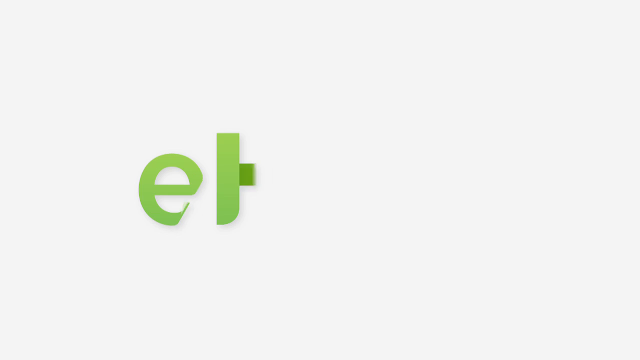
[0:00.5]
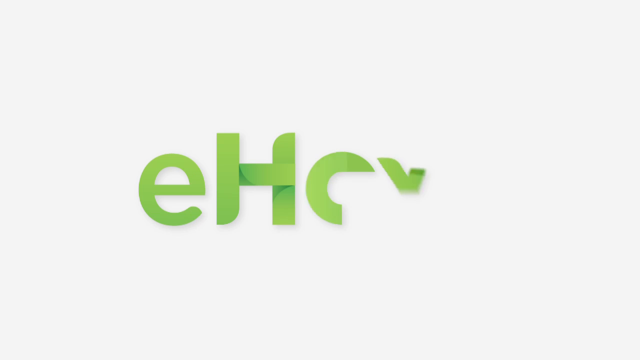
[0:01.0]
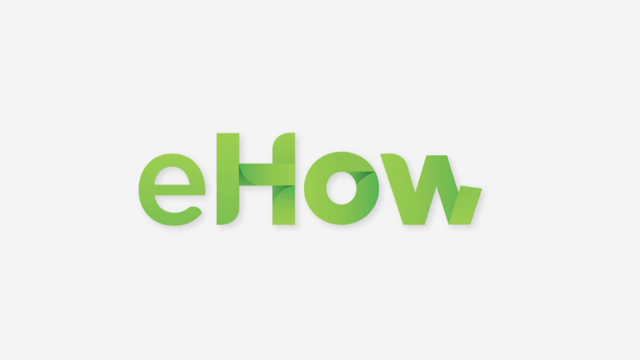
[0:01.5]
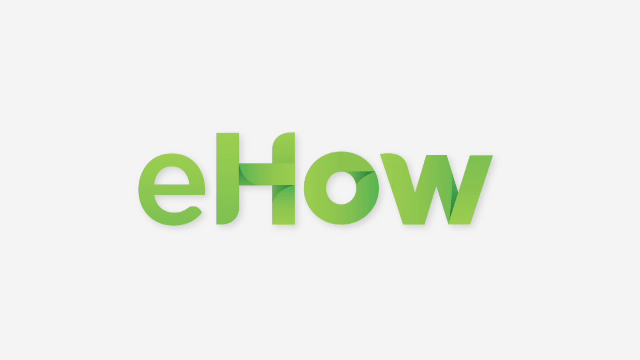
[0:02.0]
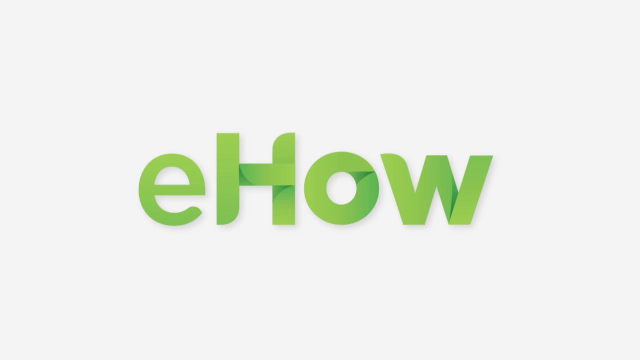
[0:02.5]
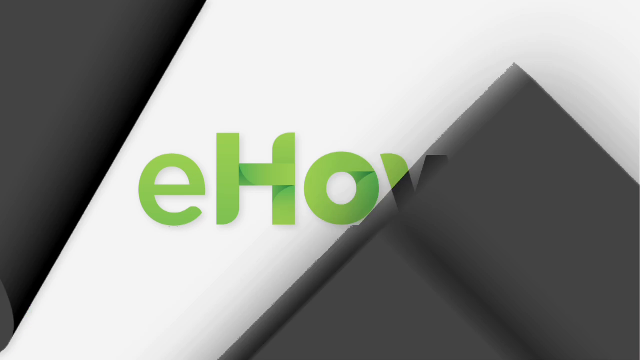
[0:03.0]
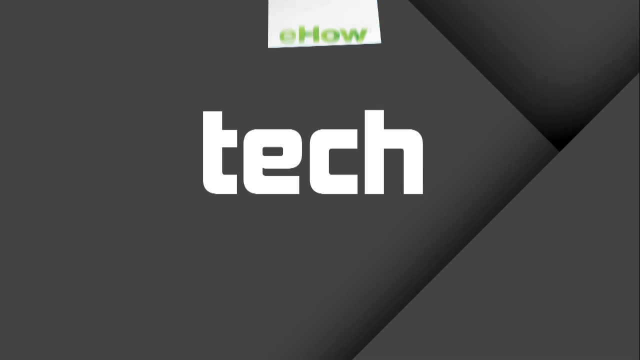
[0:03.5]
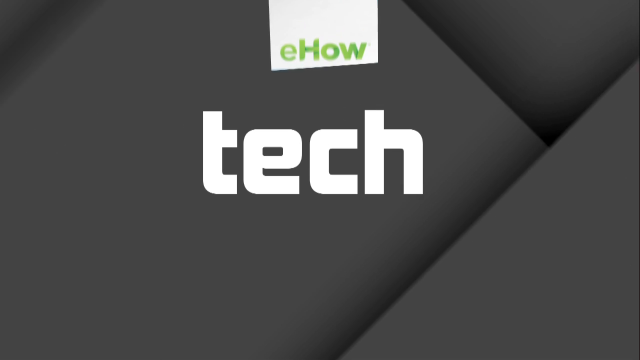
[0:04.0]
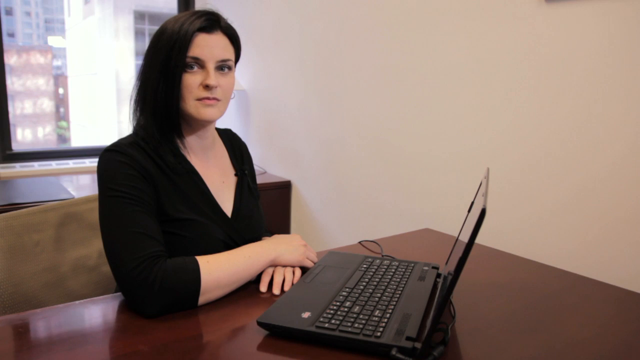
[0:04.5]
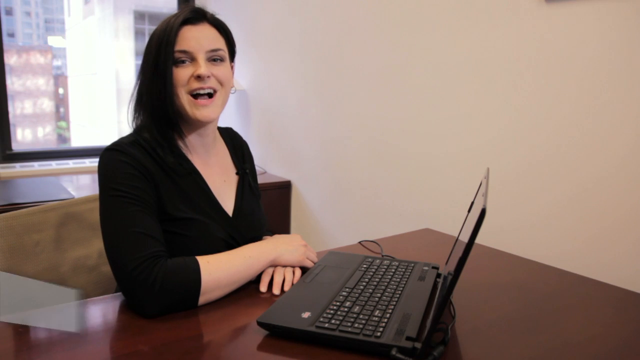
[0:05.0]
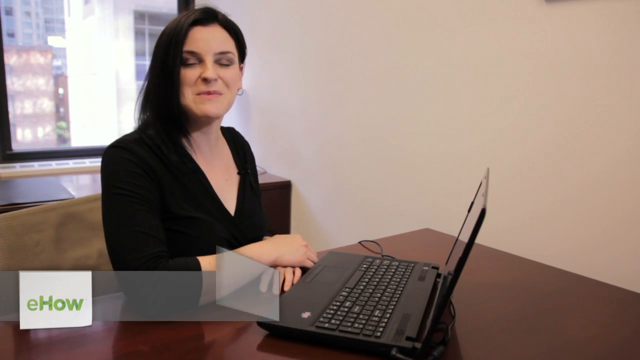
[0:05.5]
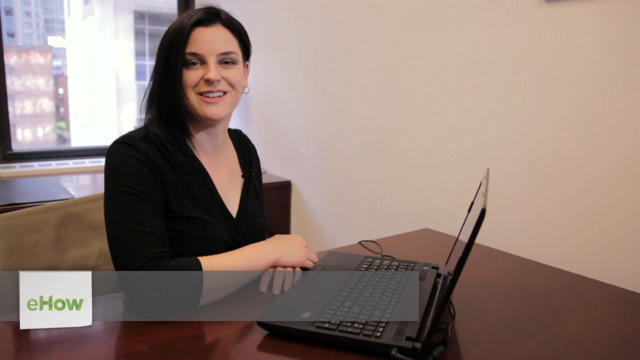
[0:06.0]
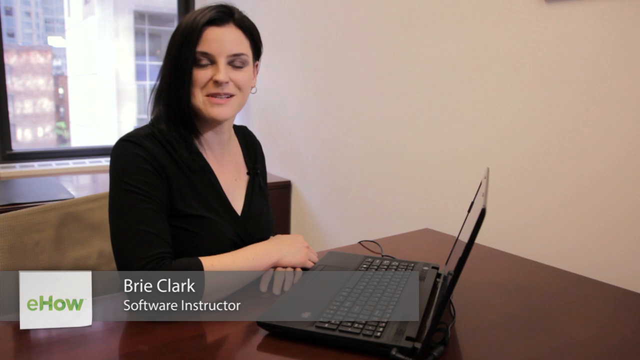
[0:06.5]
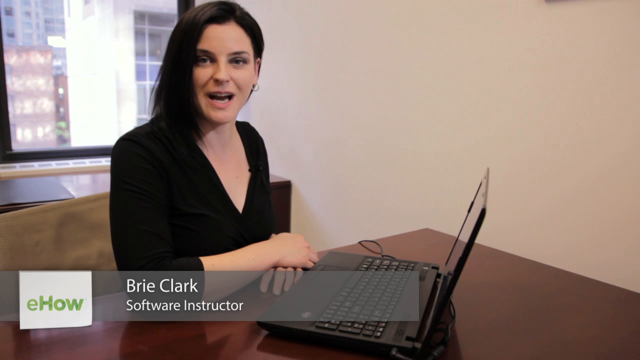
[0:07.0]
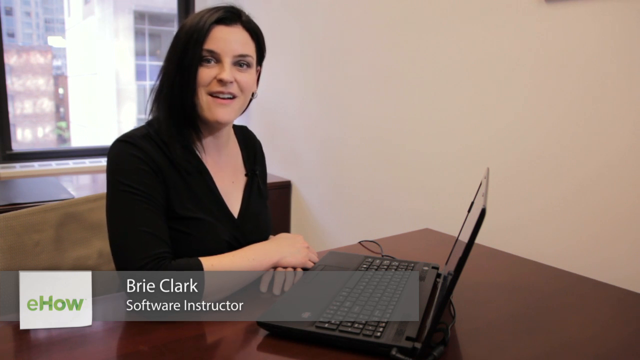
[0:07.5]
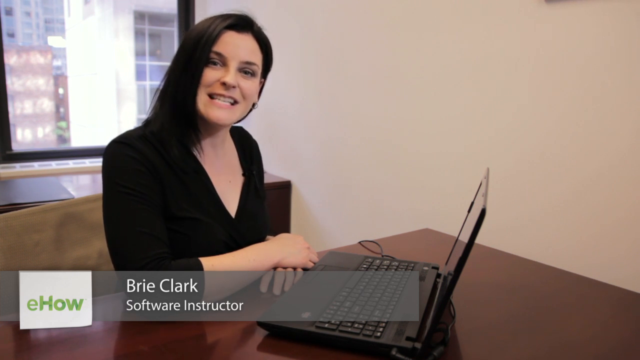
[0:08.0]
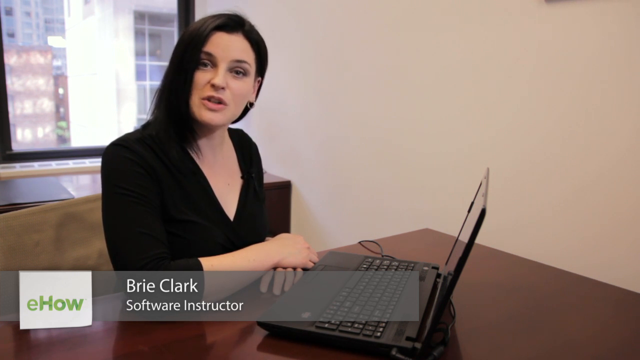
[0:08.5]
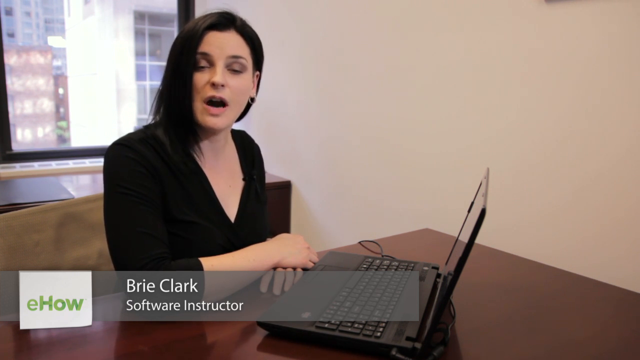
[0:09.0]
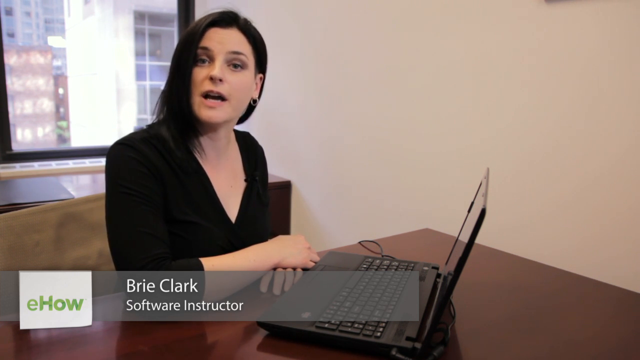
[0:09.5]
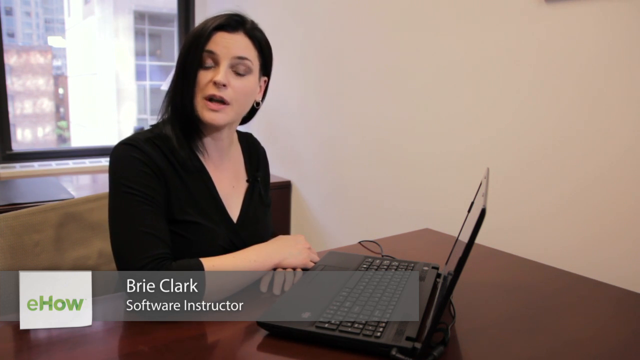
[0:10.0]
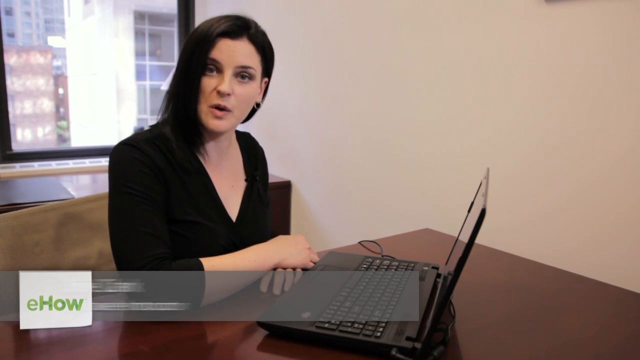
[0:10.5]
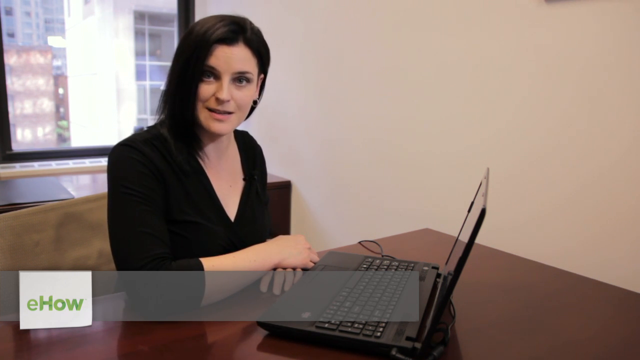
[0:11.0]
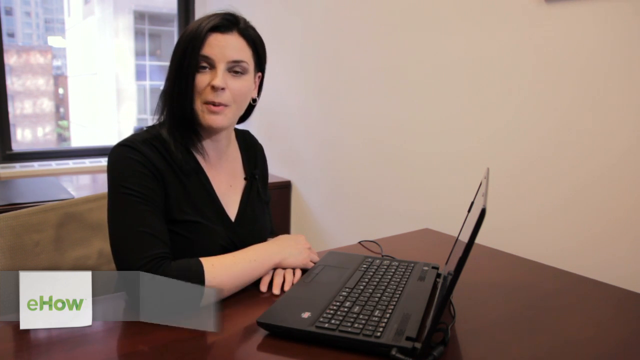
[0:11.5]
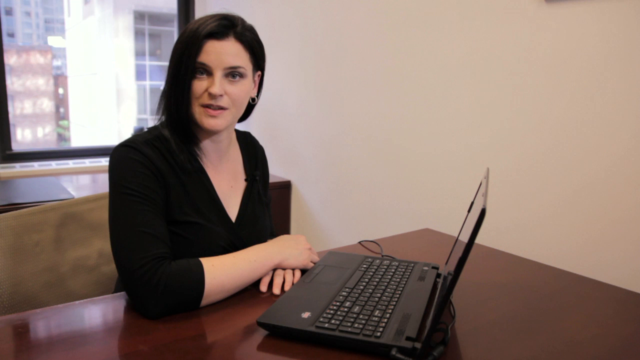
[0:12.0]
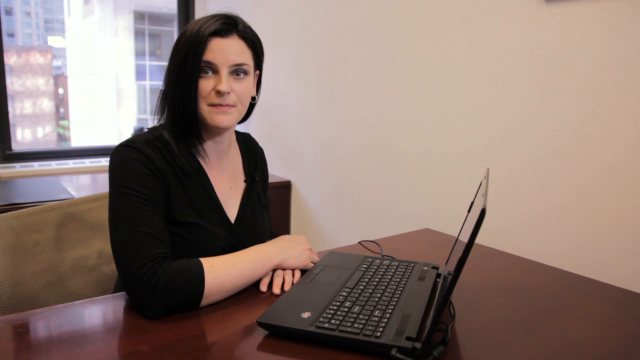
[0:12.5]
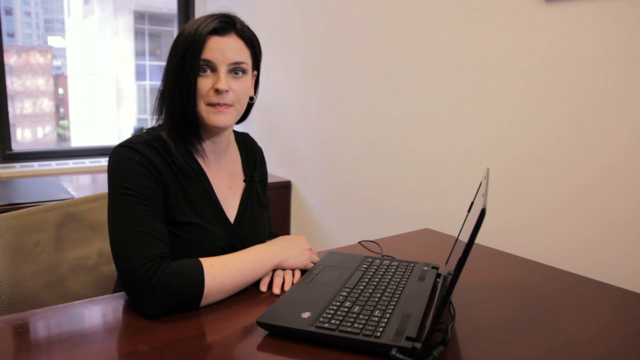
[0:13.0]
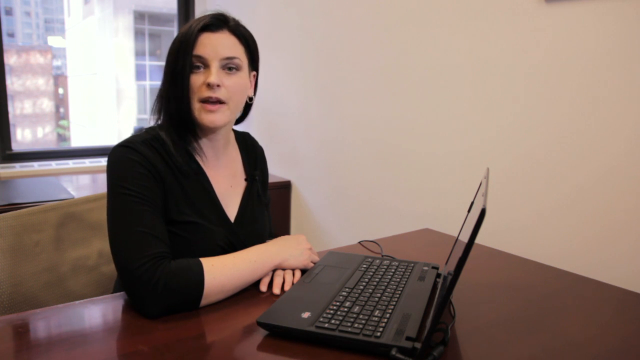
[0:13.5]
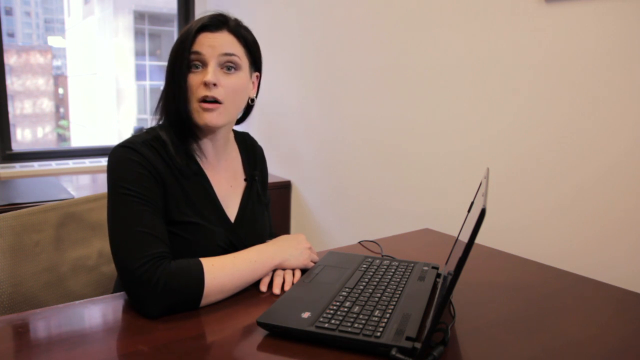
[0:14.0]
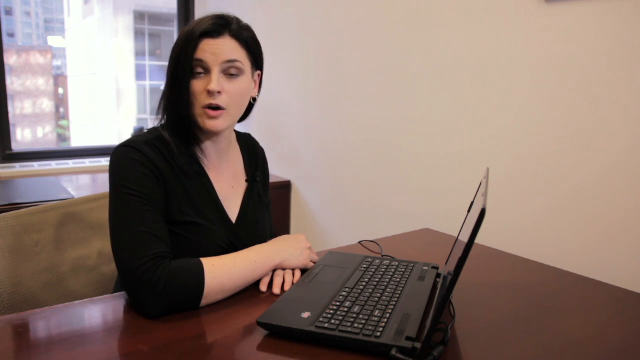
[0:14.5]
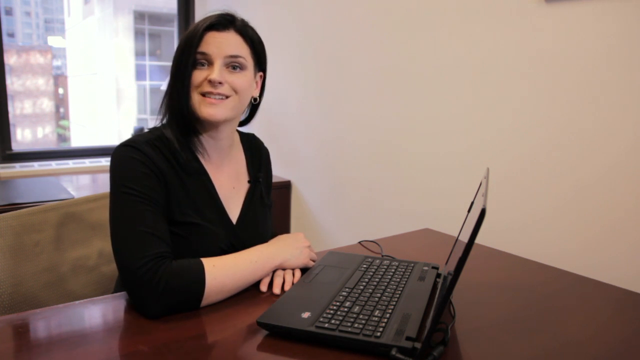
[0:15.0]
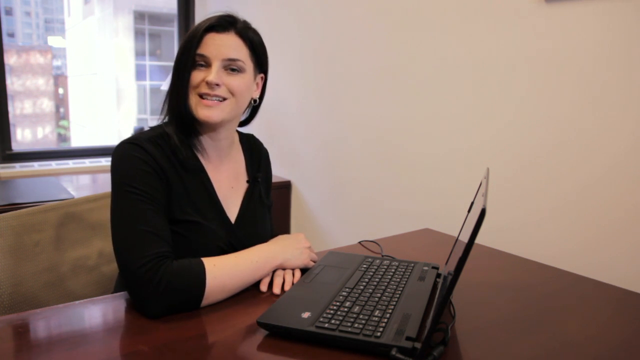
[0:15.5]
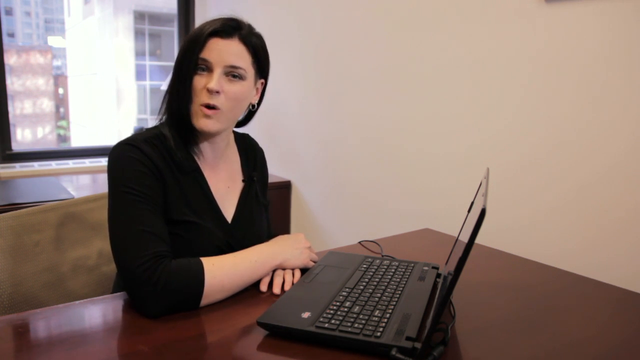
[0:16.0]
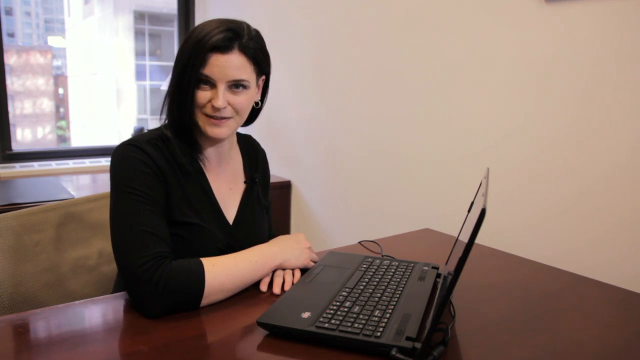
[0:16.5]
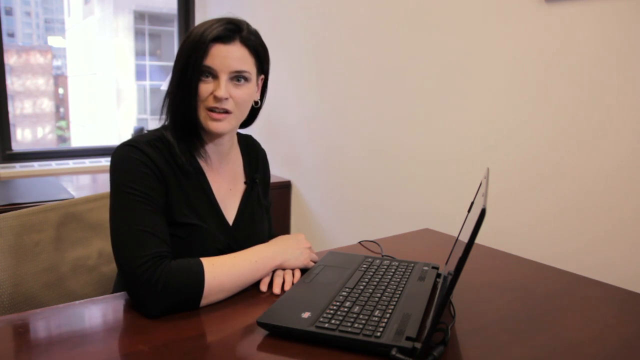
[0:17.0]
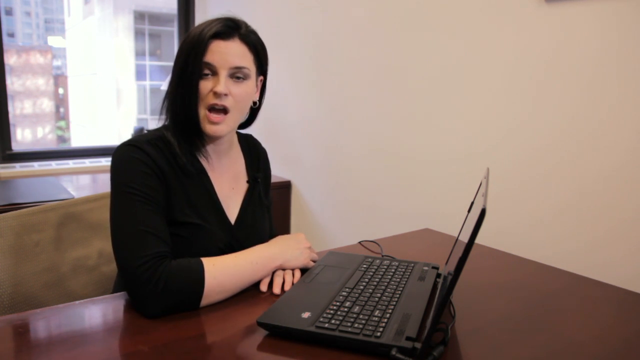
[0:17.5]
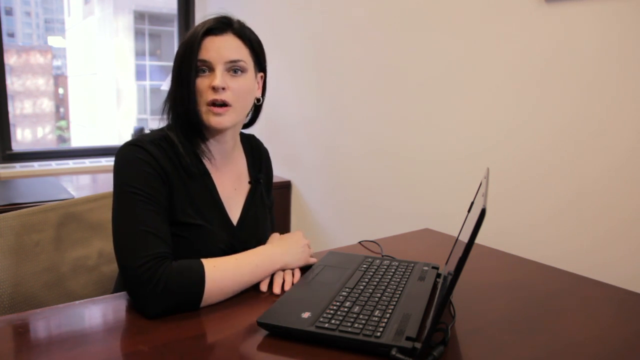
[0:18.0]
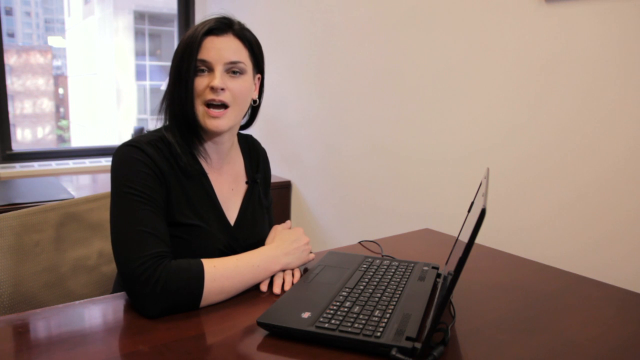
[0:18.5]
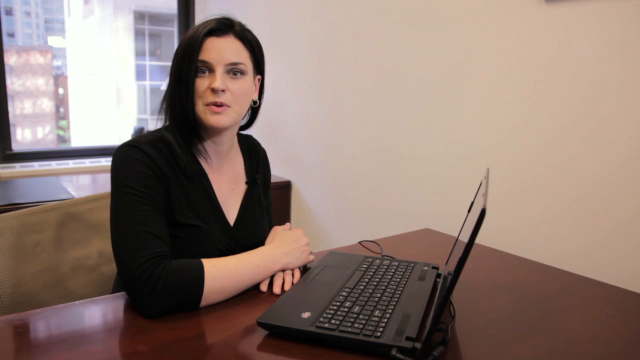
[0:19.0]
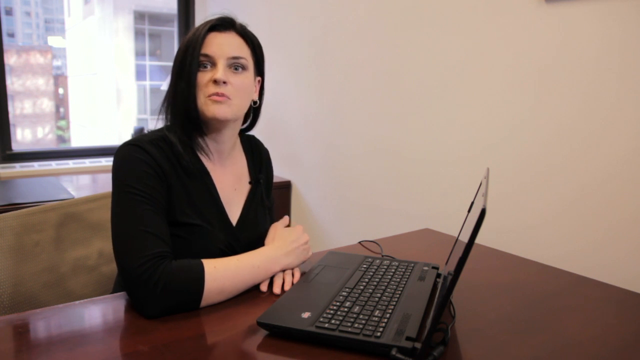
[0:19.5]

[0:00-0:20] A white background shows green text reading "ehow." It transitions to a black background with the word "tech," and then to a recording of a woman sitting behind a brown wooden desk with a black laptop in front of her. She wears a black V-neck blouse and silver hoop earrings, her hair is brushed to the right, and she is talking toward the camera. The bottom half of her body is hidden by the desk. A banner pops up labeling her "Bree Clark software instructor." Her body faces the laptop, which is pointed toward the right of the screen, while her head faces straight toward the camera, so her head is at an angle to her body. Behind her, through the window, is a white skyscraper with large window panels. She rests both her right and left elbows on the desk, with her right hand on top of her left hand.